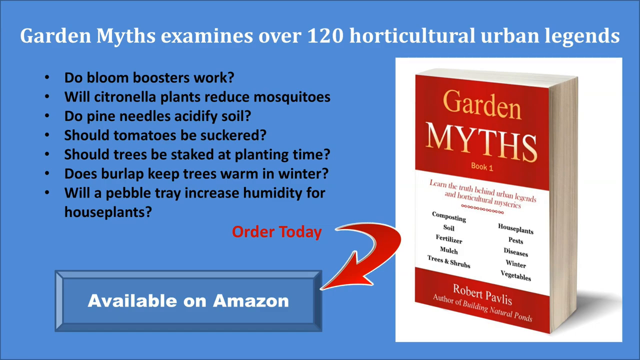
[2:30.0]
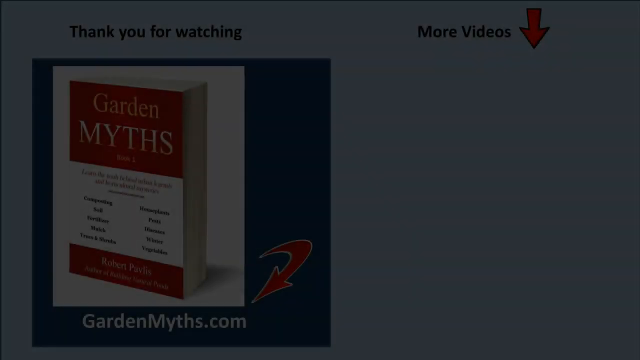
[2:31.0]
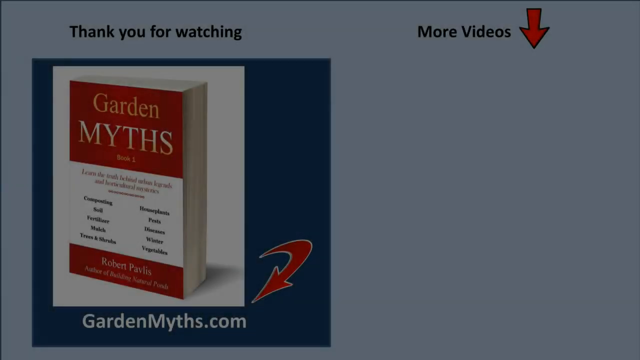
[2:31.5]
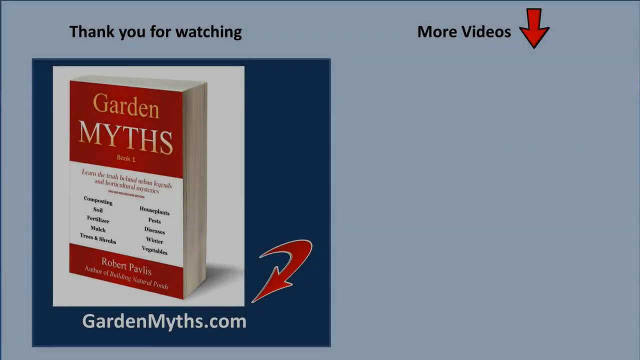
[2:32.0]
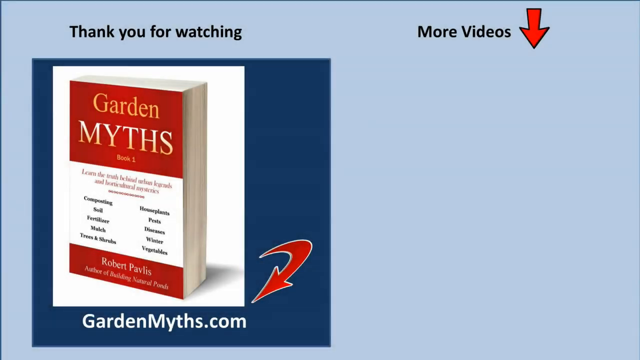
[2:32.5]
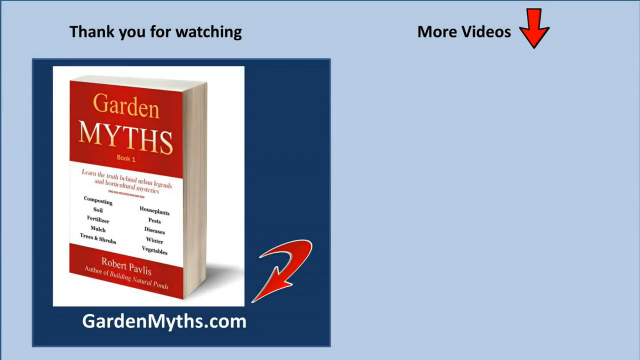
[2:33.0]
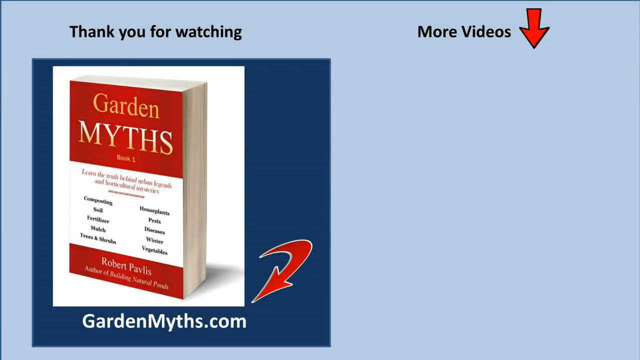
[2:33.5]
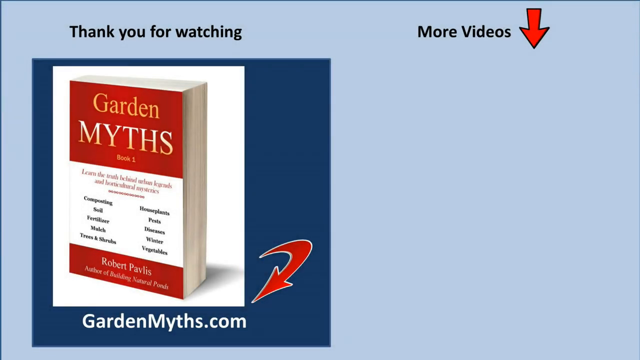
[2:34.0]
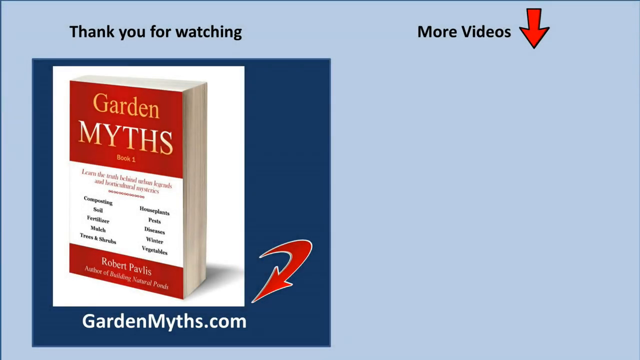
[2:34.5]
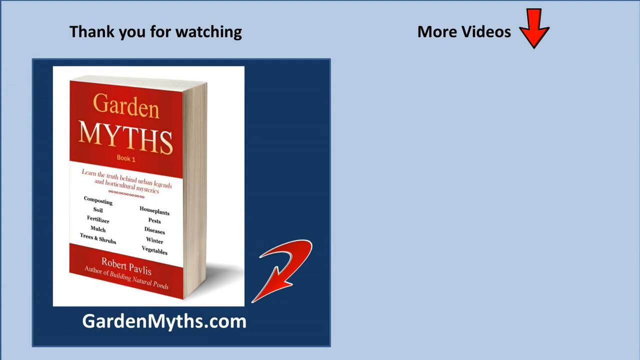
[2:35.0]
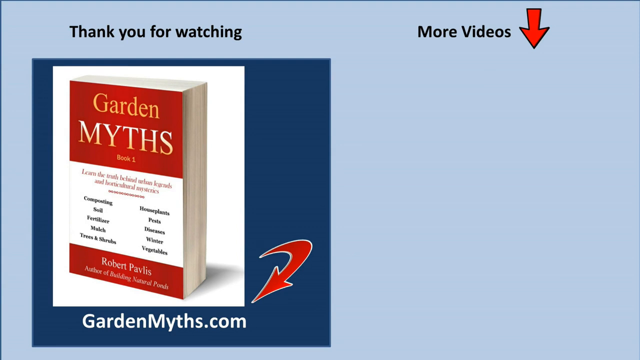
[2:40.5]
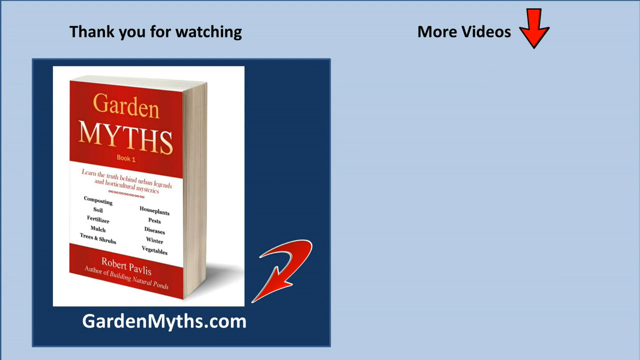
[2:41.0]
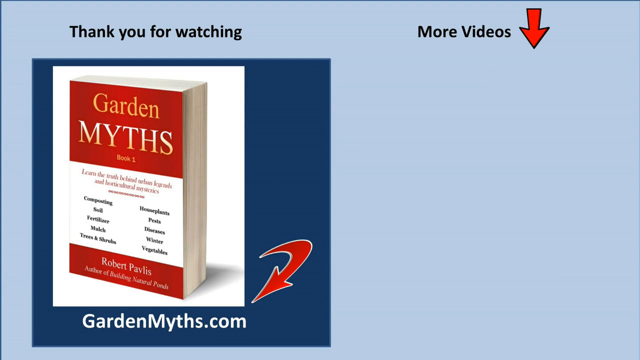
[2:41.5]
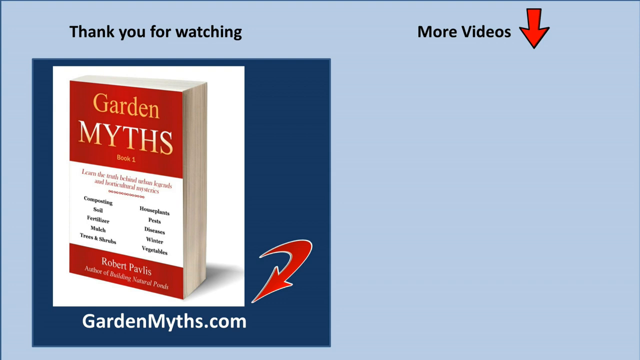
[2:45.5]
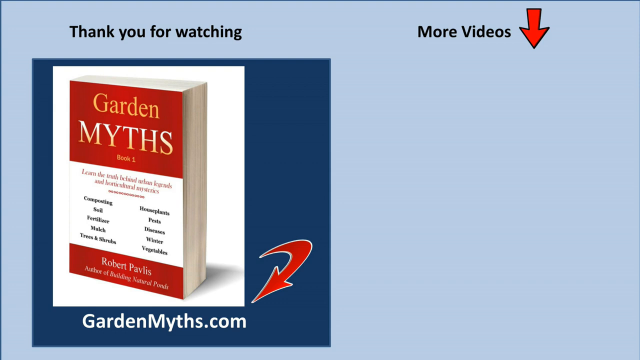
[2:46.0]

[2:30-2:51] A blue slide that looks almost like a PowerPoint has white text at the top reading "Garden Myths examines over 120 horticultural urban legends." Black bullet points underneath read "do bloom boosters work?", "will citronella plants reduce mosquitoes?", "do pine needles acidify soil?", "should tomatoes be suckered?", "should trees be staked at planting time?", "does burlap keep trees warm in the winter?" and "will a pebble tray increase humidity for houseplants?" At the bottom there is red text and an arrow pointing to a button-like icon reading "available on Amazon". On the right is a picture of the book, labeled "Garden Myths, Book 1". A new scene then shows the book again with links to Garden Myths and more videos, along with a space that potentially would hold a link to another related video.